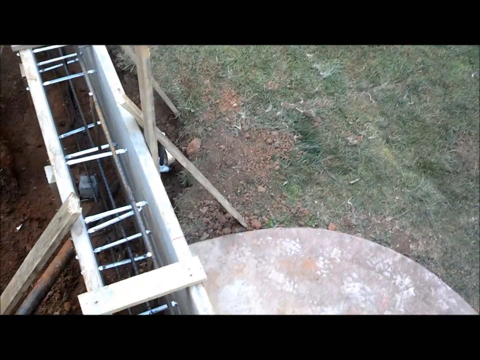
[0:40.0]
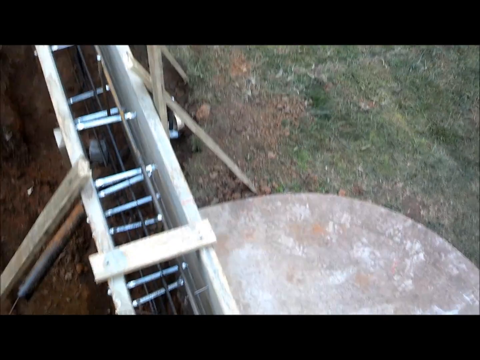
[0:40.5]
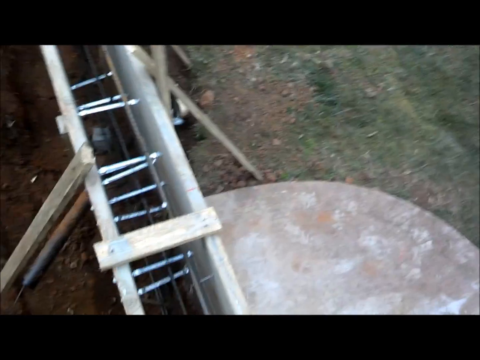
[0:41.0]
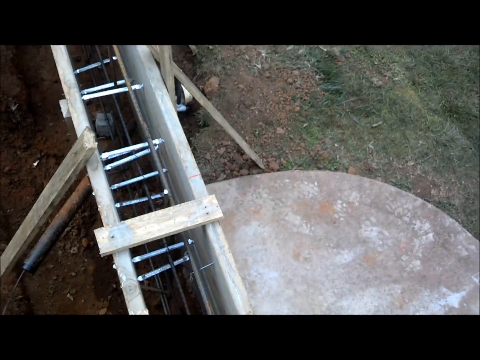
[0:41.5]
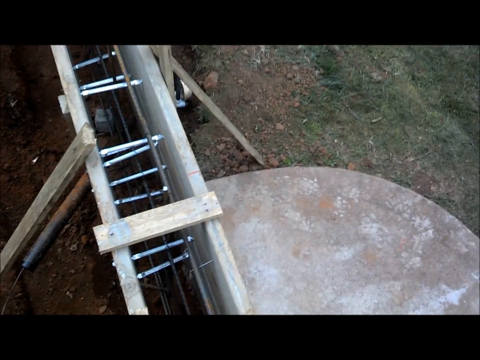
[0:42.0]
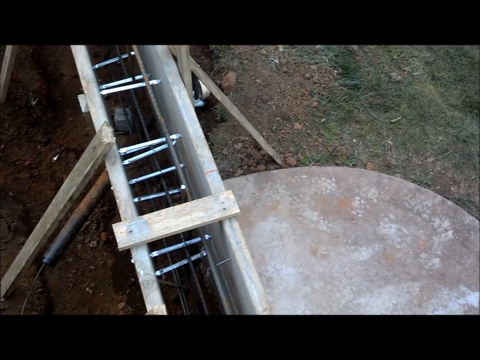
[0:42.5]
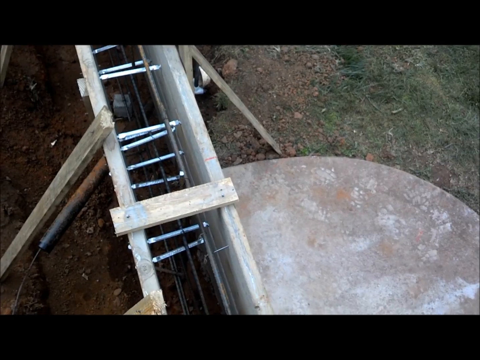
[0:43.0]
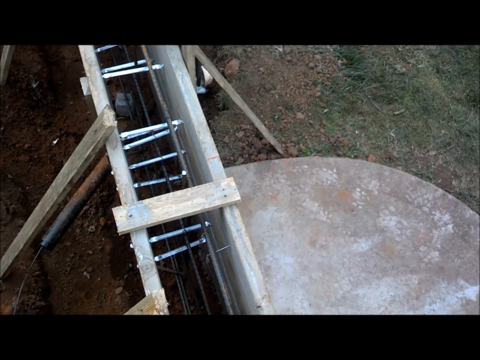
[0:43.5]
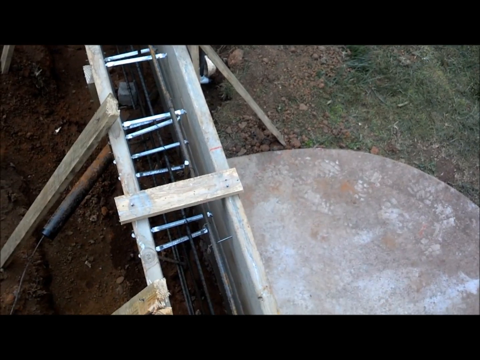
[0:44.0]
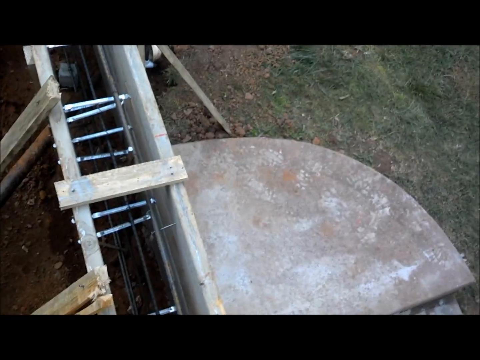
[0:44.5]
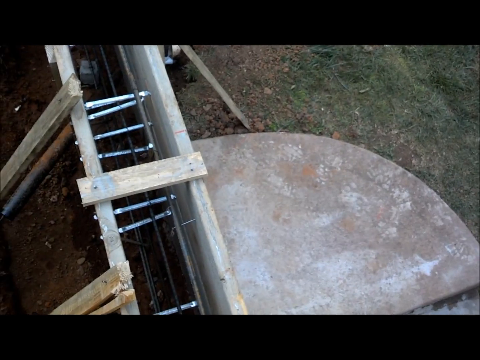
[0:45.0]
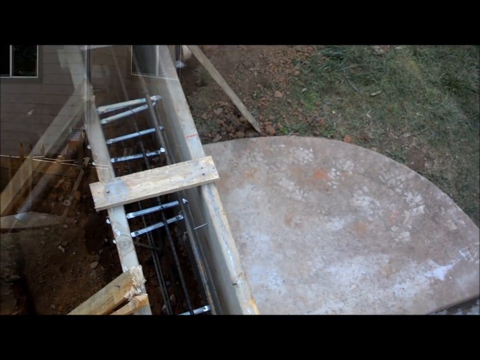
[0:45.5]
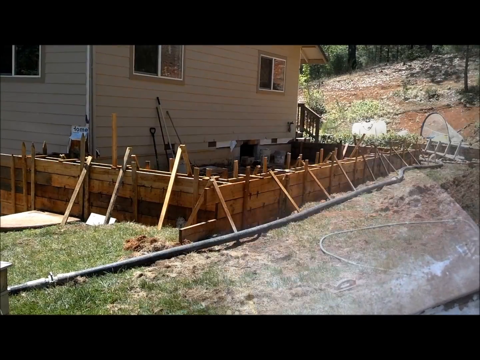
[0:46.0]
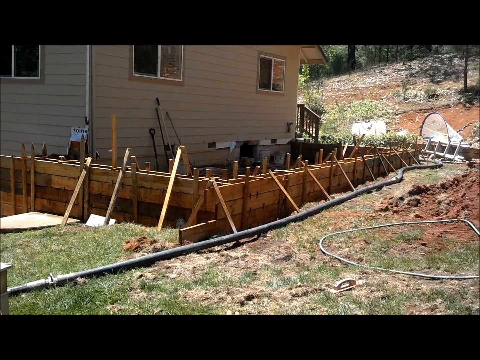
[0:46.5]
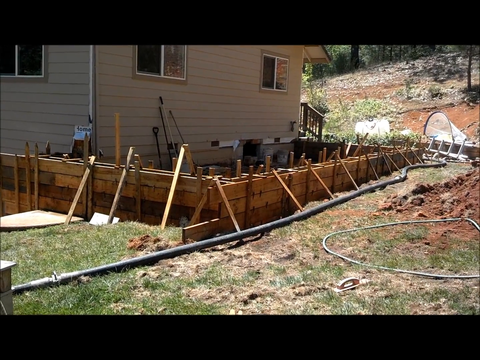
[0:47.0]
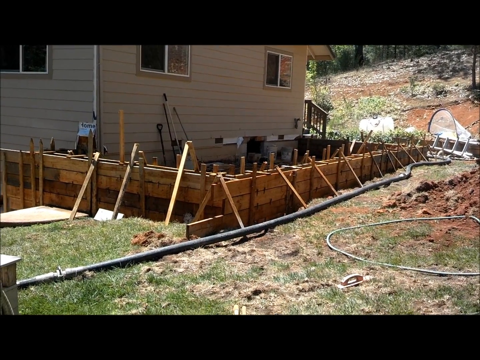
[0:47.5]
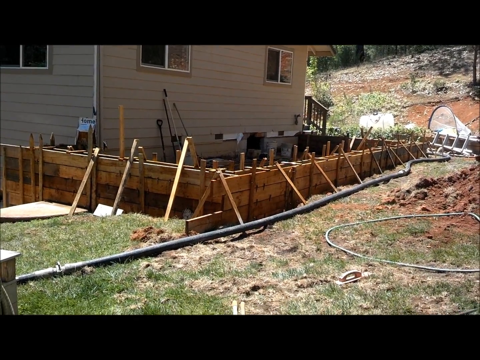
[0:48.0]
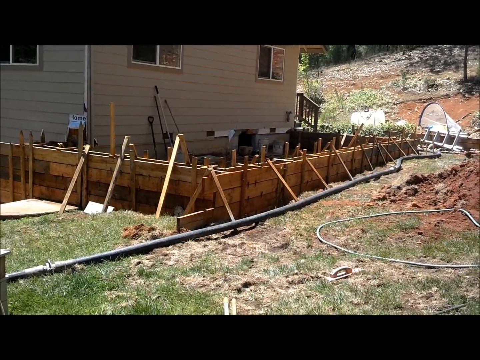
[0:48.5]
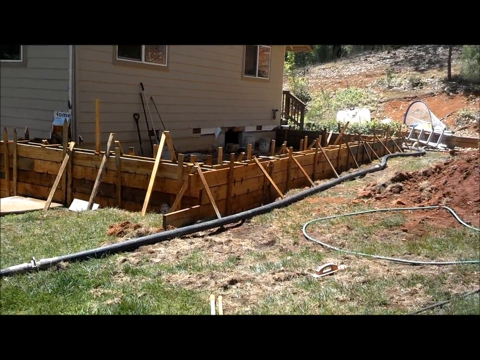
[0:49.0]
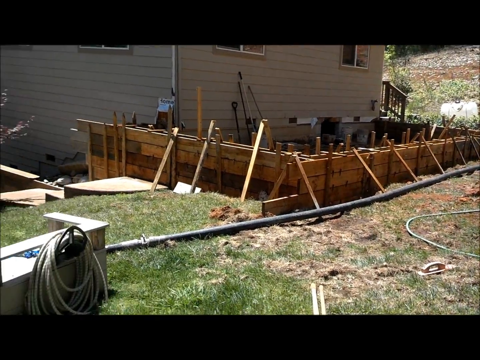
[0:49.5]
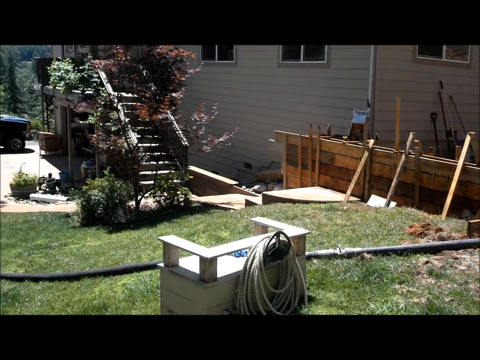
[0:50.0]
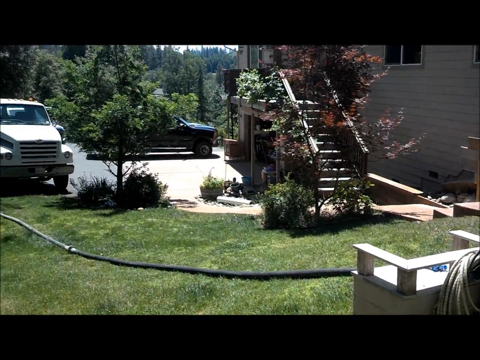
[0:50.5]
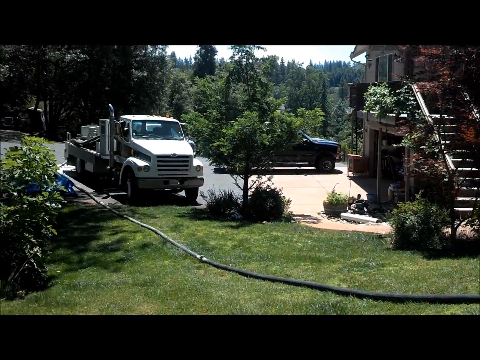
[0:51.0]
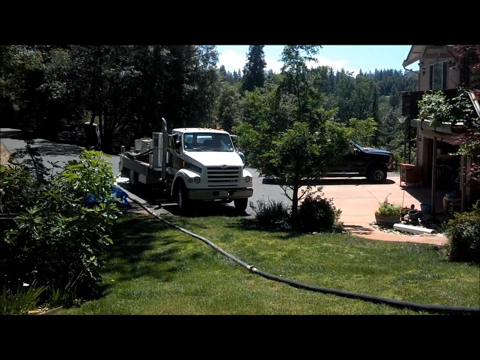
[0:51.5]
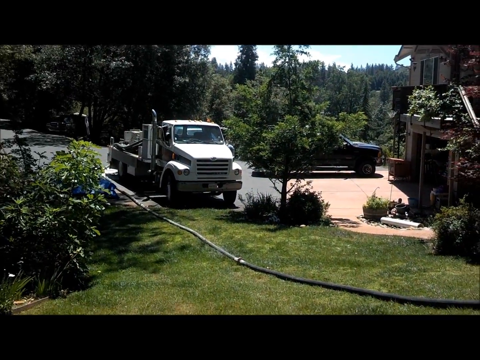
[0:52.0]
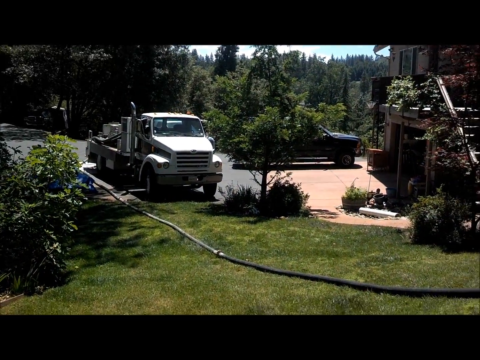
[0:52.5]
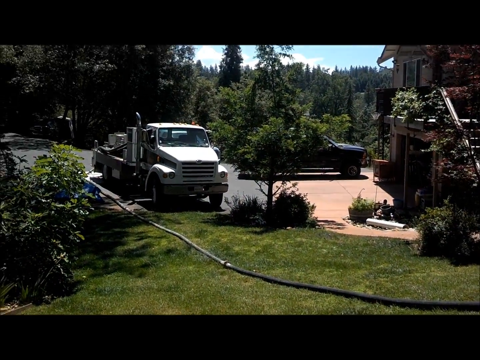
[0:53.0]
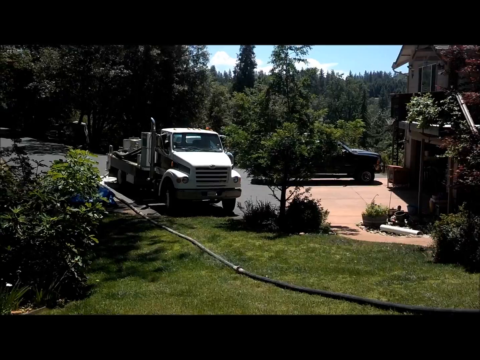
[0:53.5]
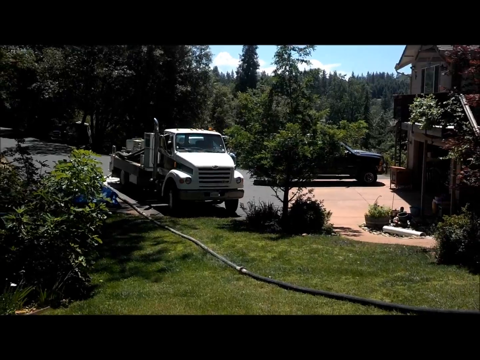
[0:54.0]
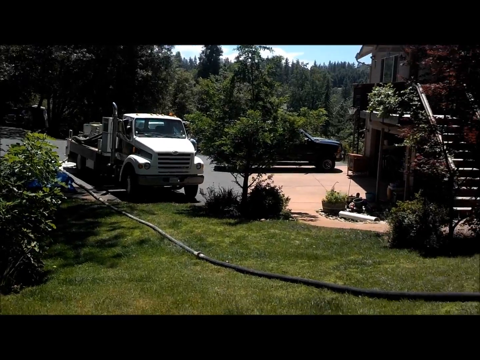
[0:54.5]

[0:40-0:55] The man shows the cinder blocks and the rebar, then a shot from behind the side of the house shows how much is being added, running the length of the house for a whole new subfloor. The camera pans out to show a truck with a large hose attached, probably a cement truck. No cement has been poured yet.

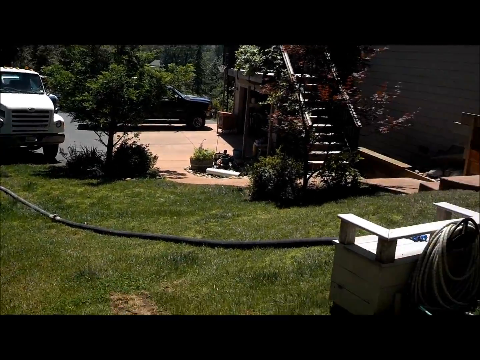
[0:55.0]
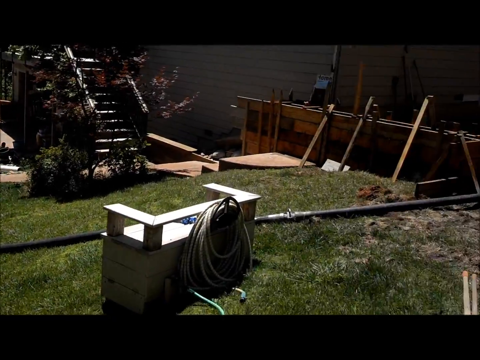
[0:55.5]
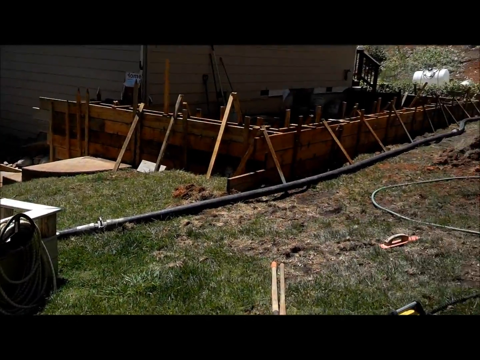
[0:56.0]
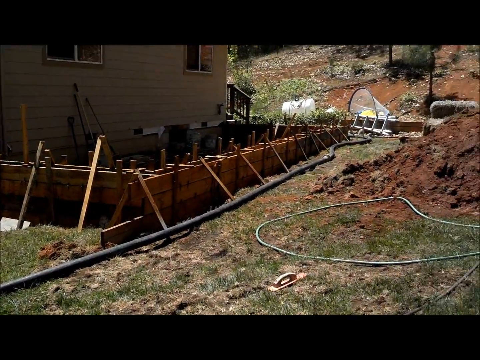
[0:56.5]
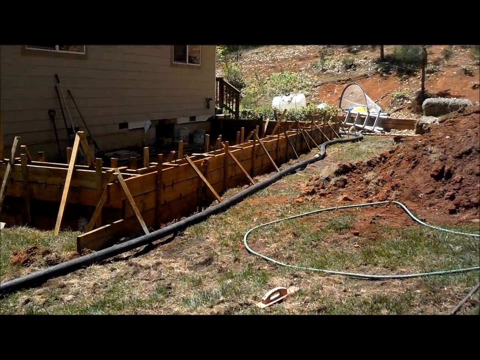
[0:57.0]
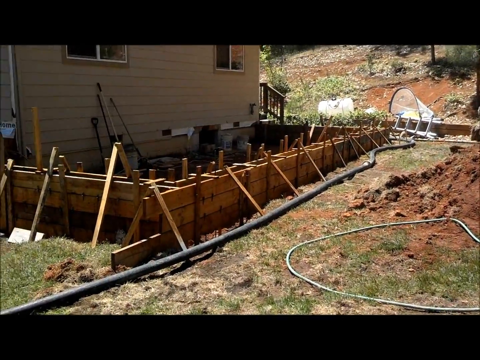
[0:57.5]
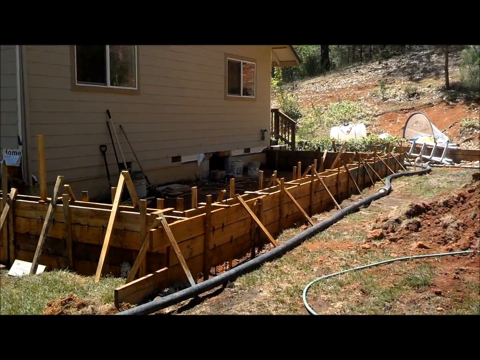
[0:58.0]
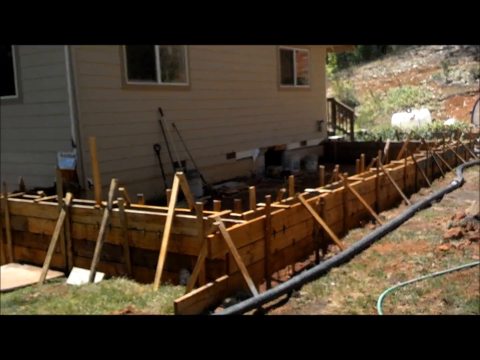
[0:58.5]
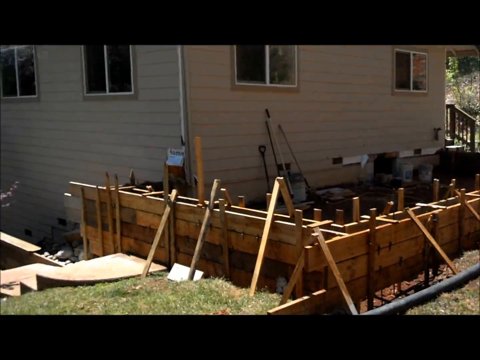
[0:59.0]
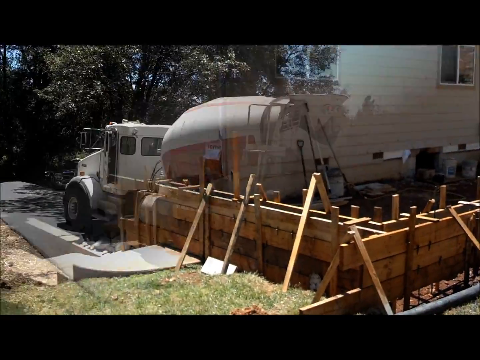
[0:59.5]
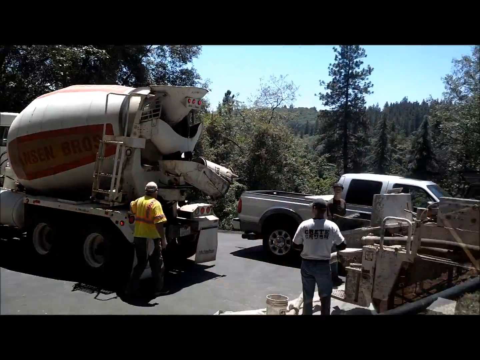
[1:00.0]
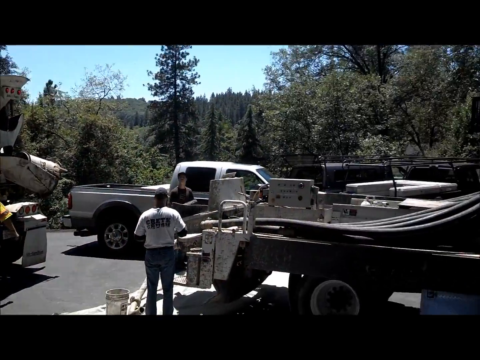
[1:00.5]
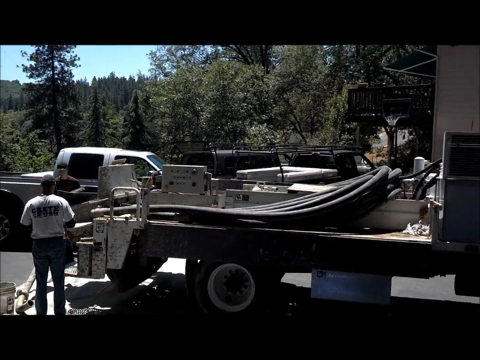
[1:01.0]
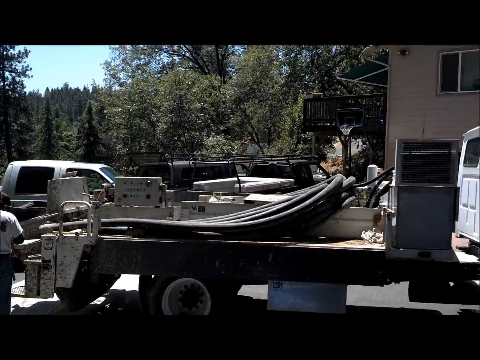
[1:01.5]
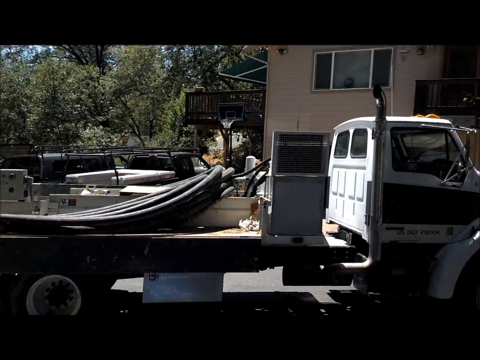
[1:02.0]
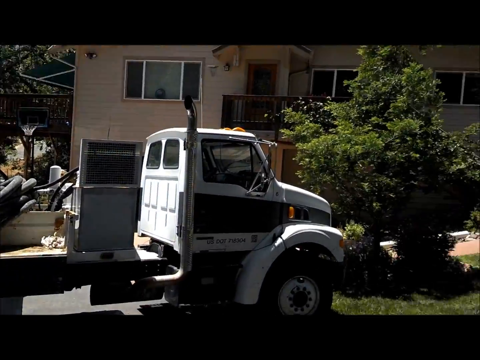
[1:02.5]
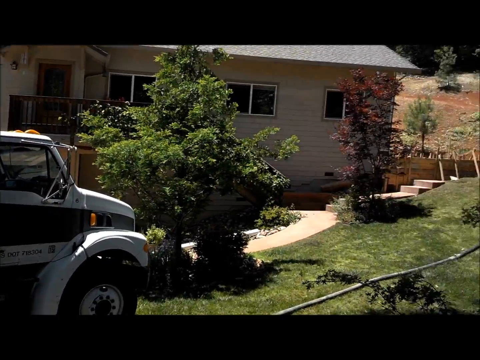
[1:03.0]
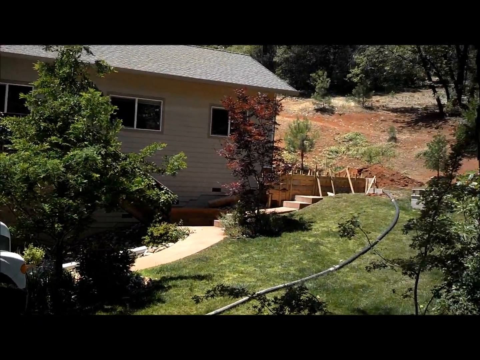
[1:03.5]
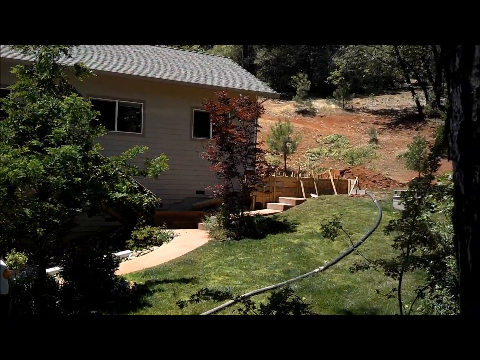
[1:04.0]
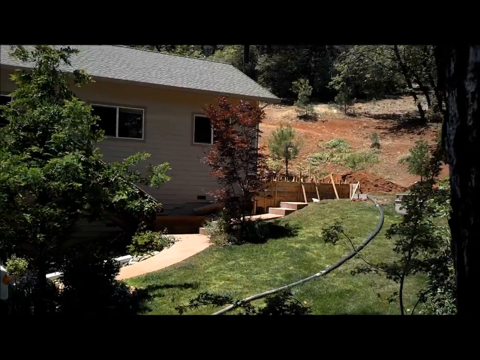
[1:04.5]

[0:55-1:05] The cement truck is shown, apparently mixing, along with another truck that looks like a tow truck with something on its bed, possibly rebar. Hoses shoot up, showing the distance from the trucks to the area where the cement will go, which does not look far. A couple of construction workers in hard helmets and safety vests walk around, and a long, big, thick hose runs throughout the yard and the house, though what it connects to is not visible.